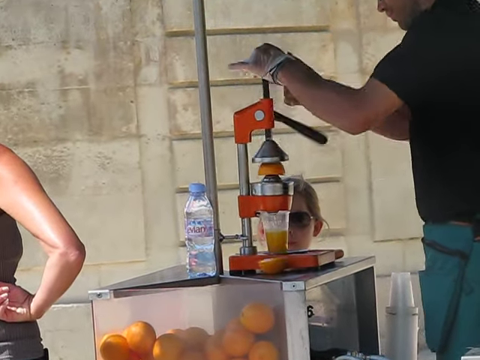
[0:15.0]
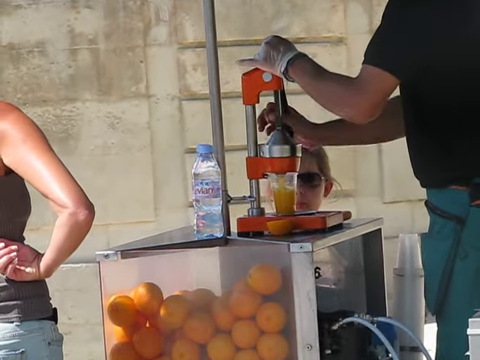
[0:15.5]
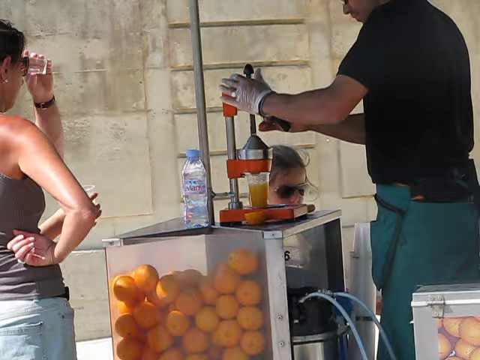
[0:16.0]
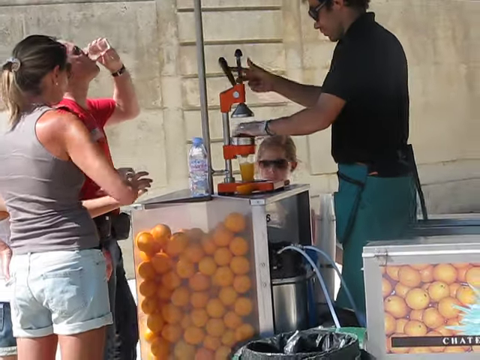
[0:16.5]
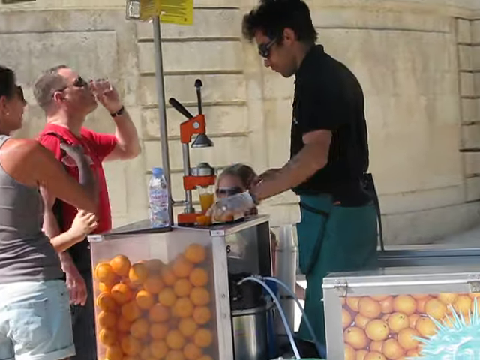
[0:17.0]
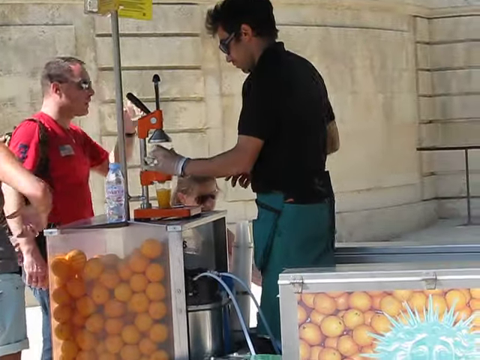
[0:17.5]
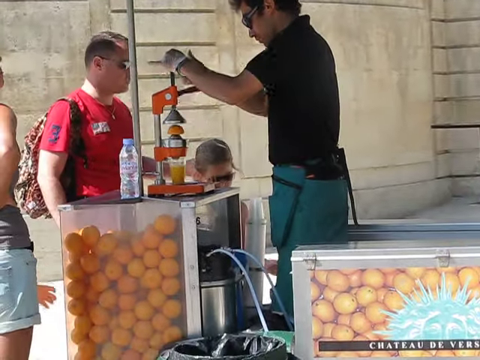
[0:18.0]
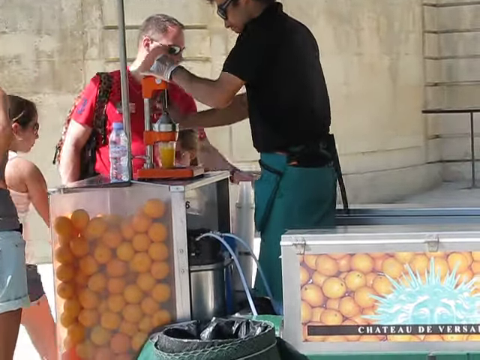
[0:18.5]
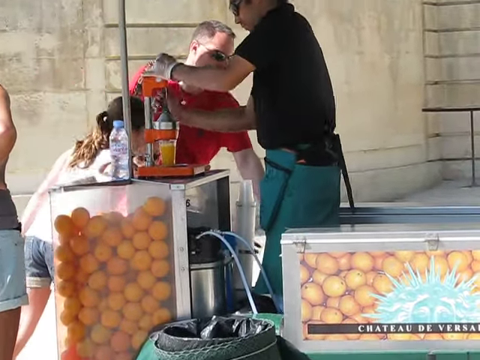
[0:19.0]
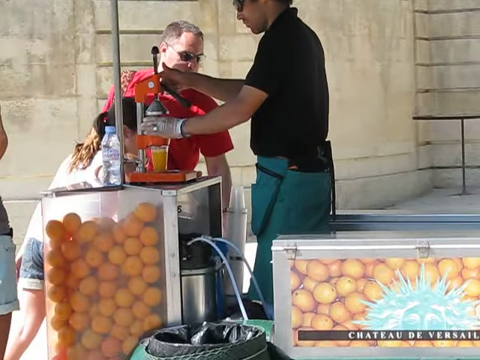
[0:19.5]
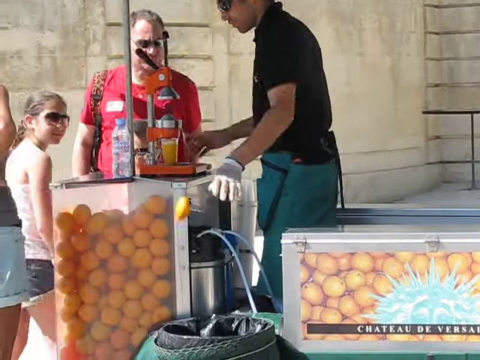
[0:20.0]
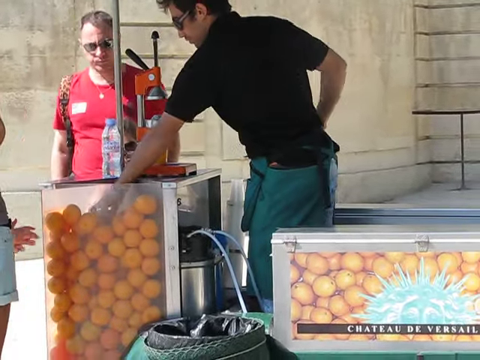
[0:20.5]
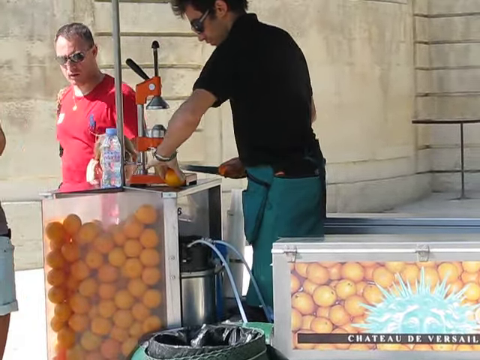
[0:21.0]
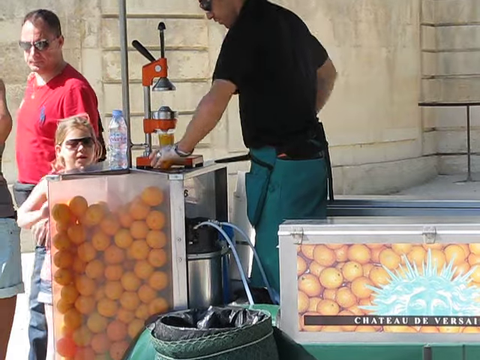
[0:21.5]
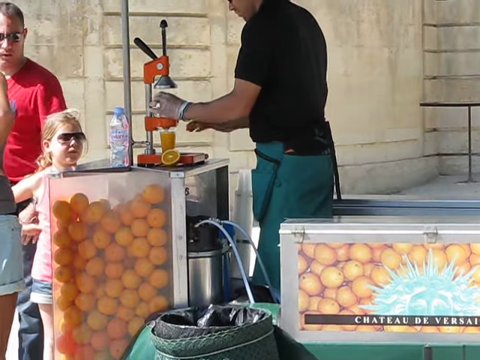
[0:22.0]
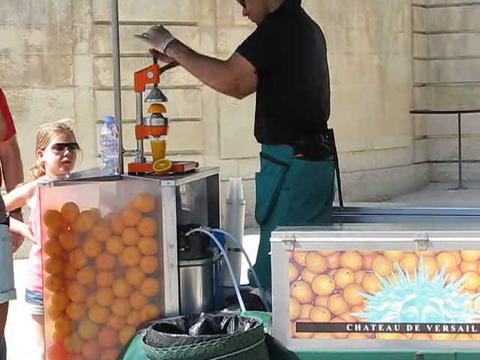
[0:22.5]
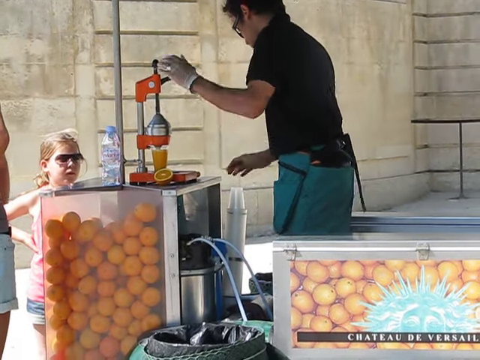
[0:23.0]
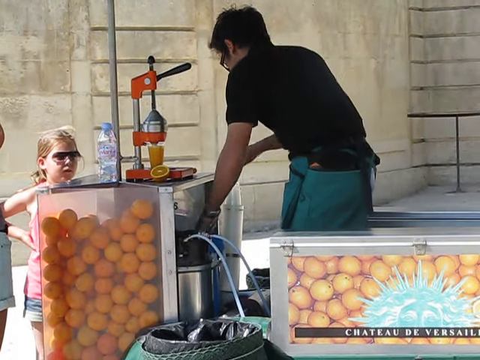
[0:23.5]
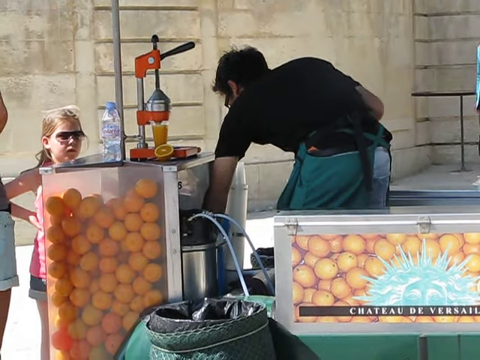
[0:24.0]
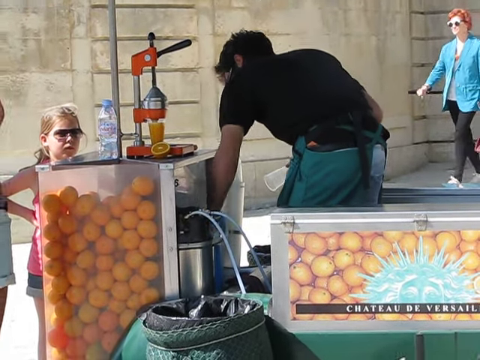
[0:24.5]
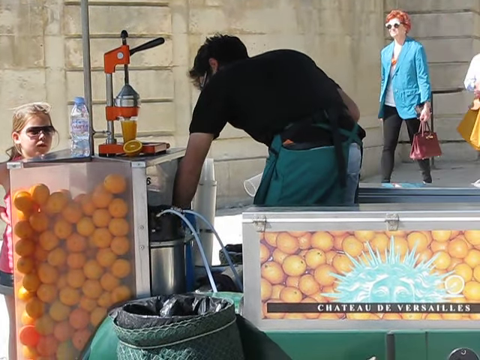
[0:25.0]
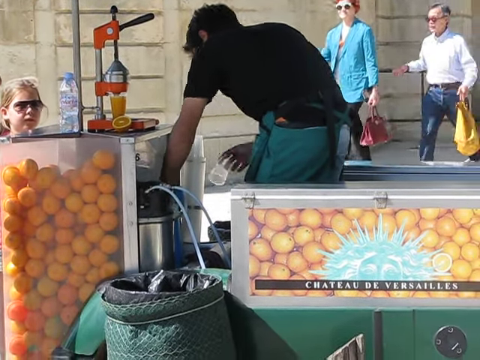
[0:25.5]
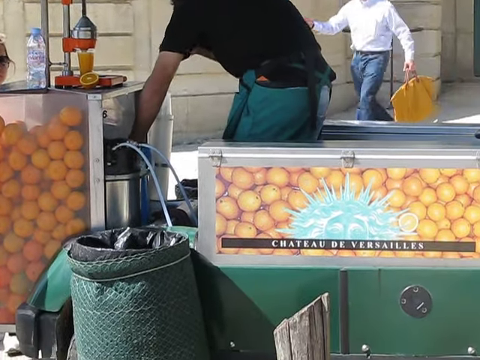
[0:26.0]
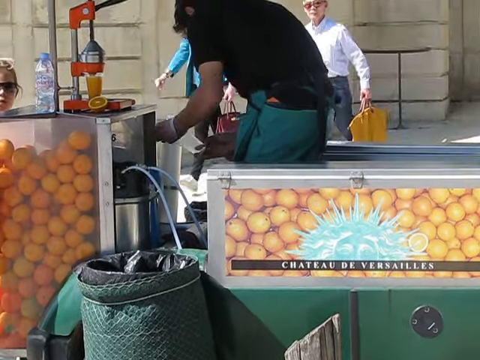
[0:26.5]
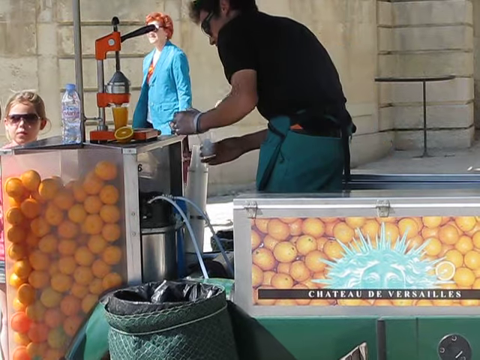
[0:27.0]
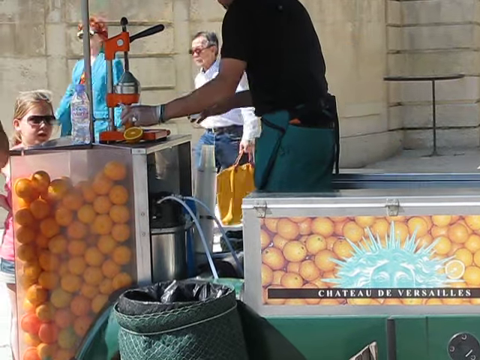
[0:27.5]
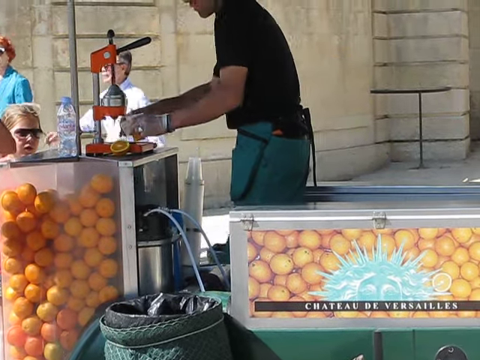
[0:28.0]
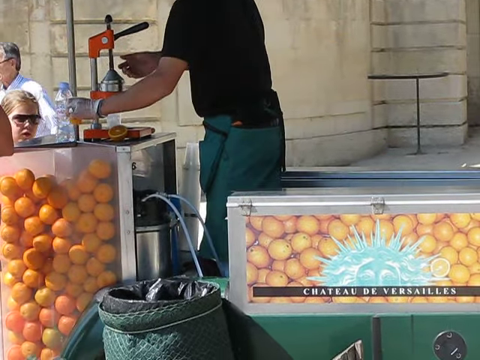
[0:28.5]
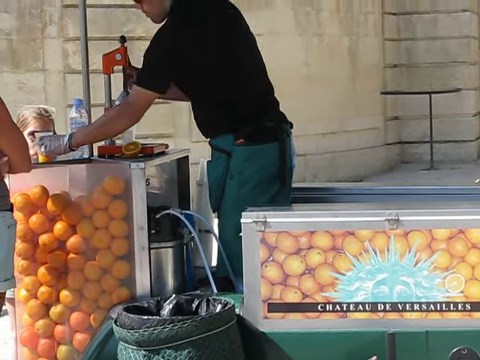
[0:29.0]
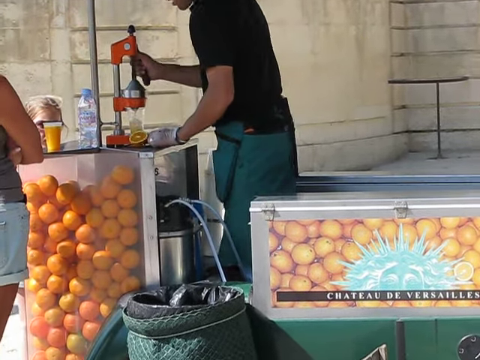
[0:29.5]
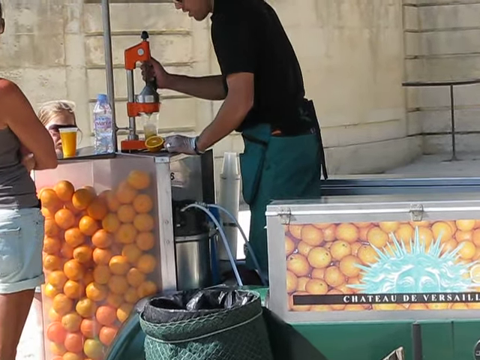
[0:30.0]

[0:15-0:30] The man is on the right side, wearing a black shirt, teal shorts and plastic gloves on his left hand. In the middle is the machine, an orange pressing machine for making orange juice, which is silver and orange colored. A plastic cup is under the machine so the orange juice can be poured inside it. A little girl stands in front of the machine; she has glasses on and what looks like light brown hair. A small plastic bottle of water is to the left of the orange pressing machine; it looks like it has a blue cap, with some text on it. A woman with a white skin tone stands on the far left of the man with her hands on her hips. The camera zooms out, revealing that the woman is wearing light blue shorts and a gray short top, with her hair tied into a ponytail. Another man, in a red shirt with a backpack and glasses, dumps a glass into what is apparently a trash can as the man continues to make multiple orange juice bottles. Several people pass in the background, going from right to left; the people in the background are older folk.